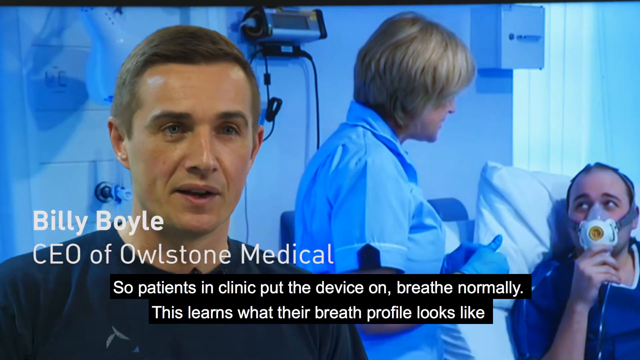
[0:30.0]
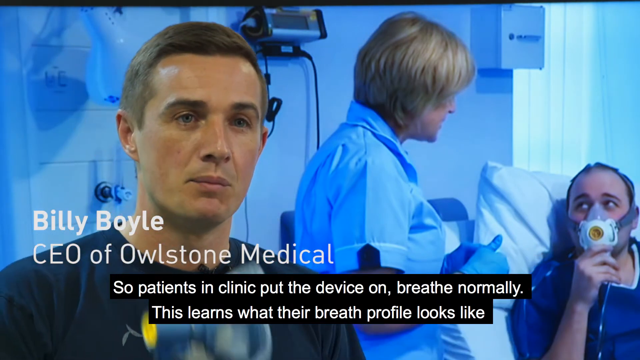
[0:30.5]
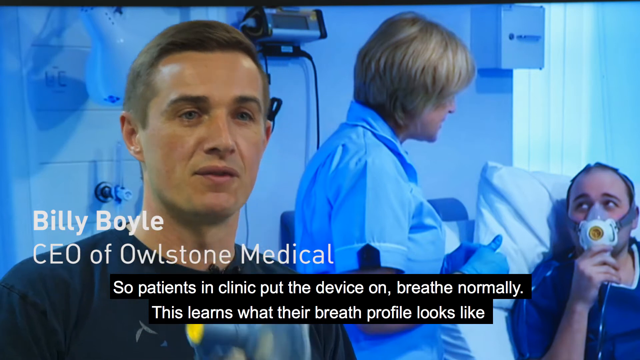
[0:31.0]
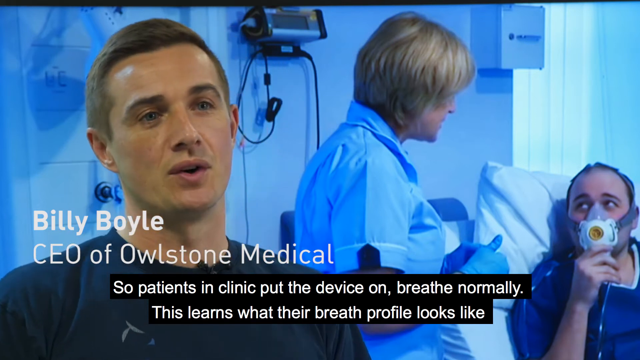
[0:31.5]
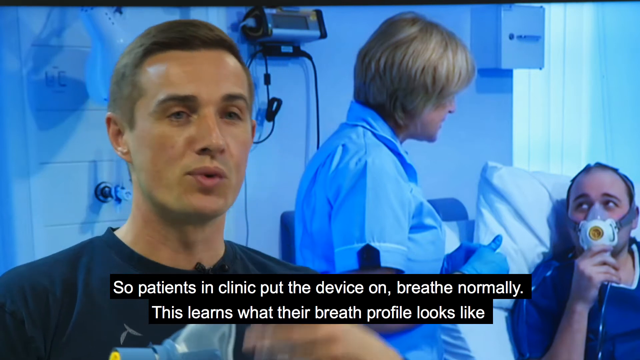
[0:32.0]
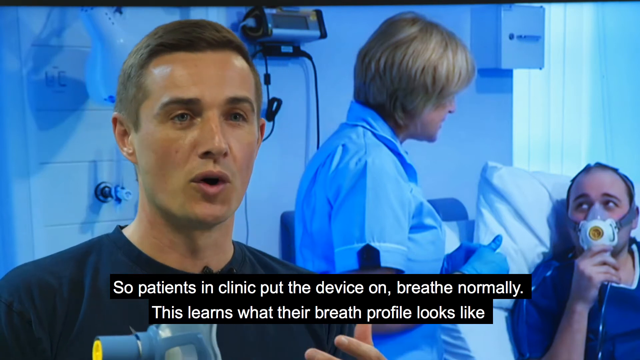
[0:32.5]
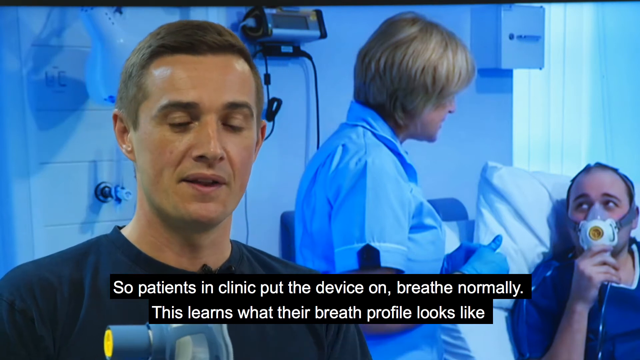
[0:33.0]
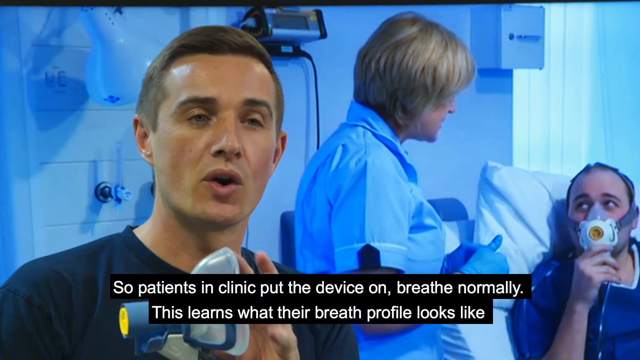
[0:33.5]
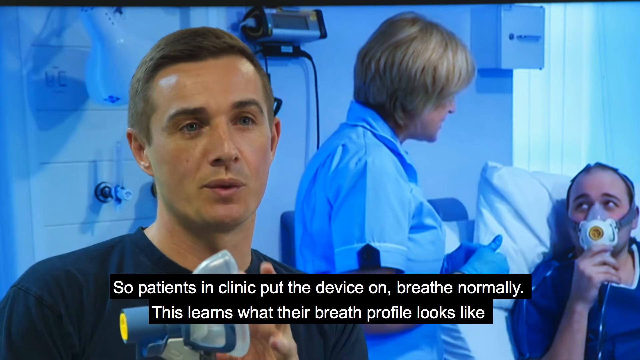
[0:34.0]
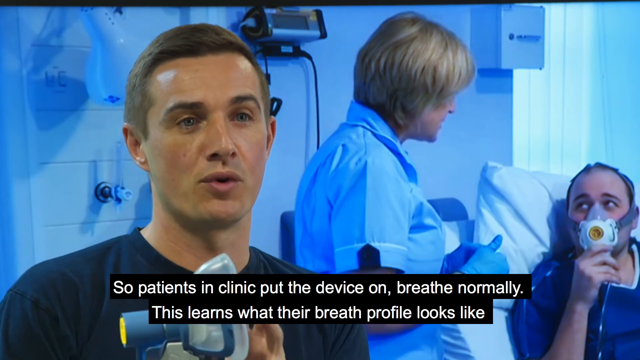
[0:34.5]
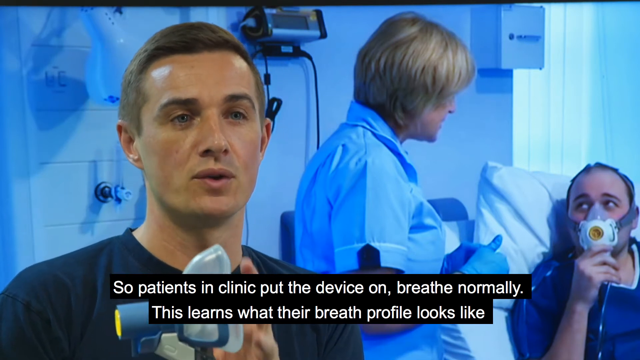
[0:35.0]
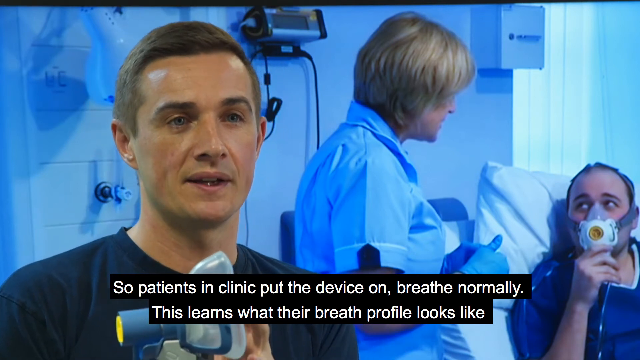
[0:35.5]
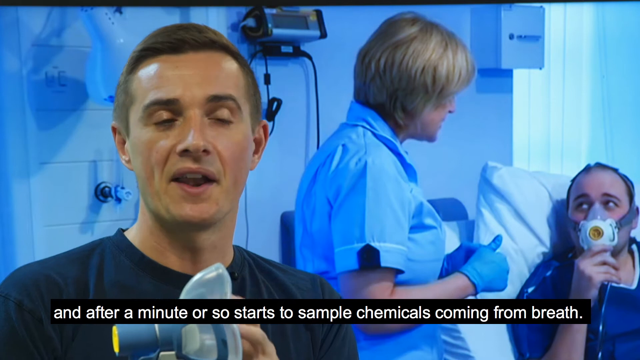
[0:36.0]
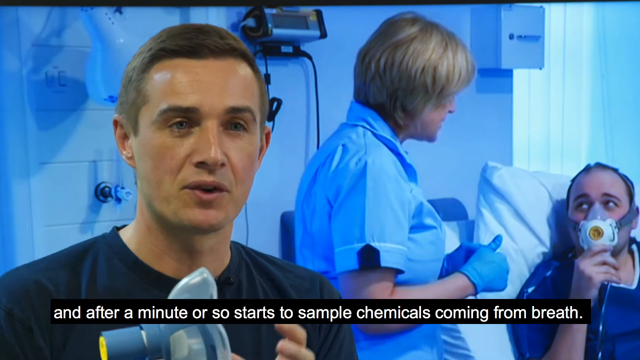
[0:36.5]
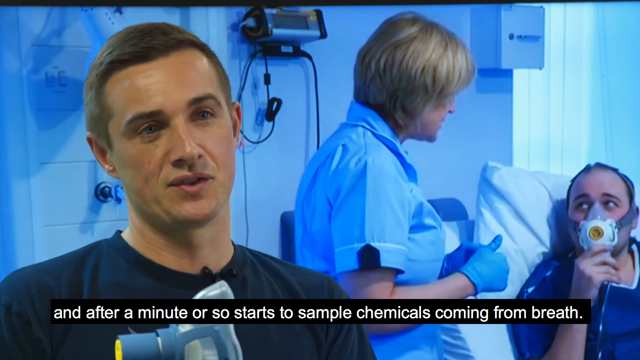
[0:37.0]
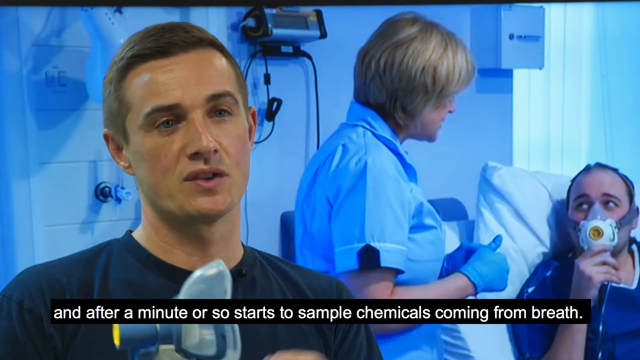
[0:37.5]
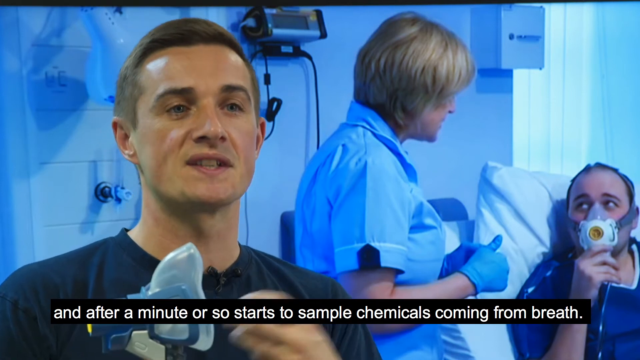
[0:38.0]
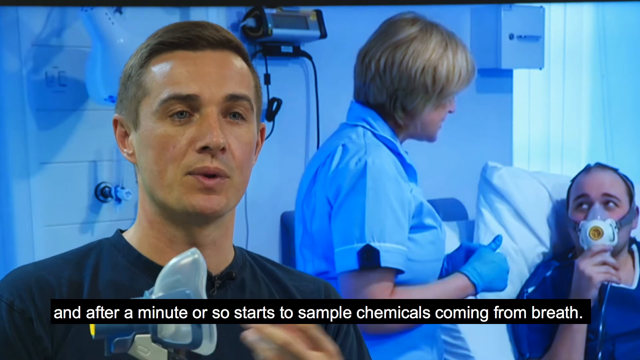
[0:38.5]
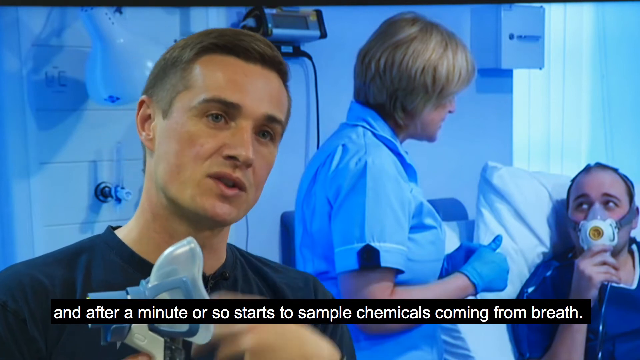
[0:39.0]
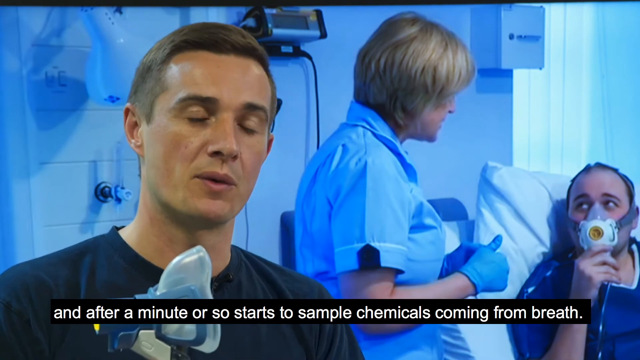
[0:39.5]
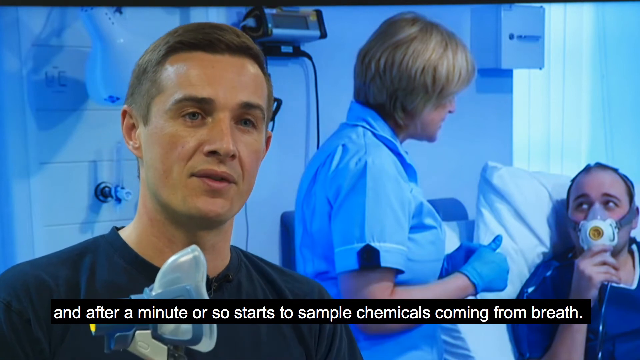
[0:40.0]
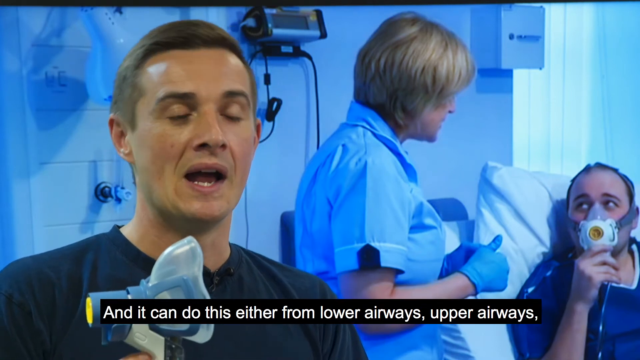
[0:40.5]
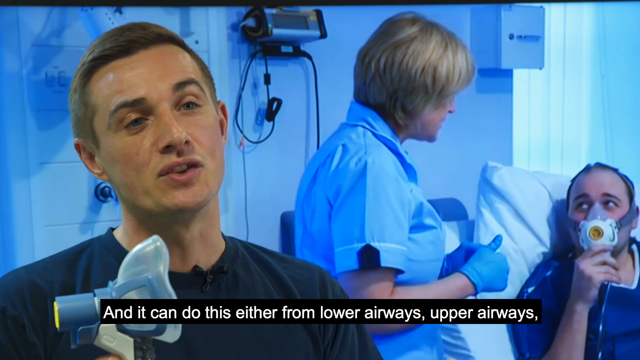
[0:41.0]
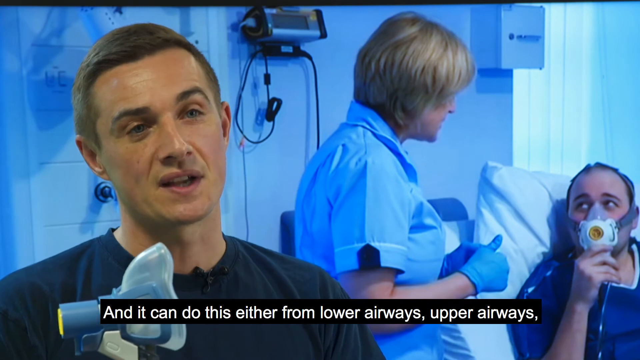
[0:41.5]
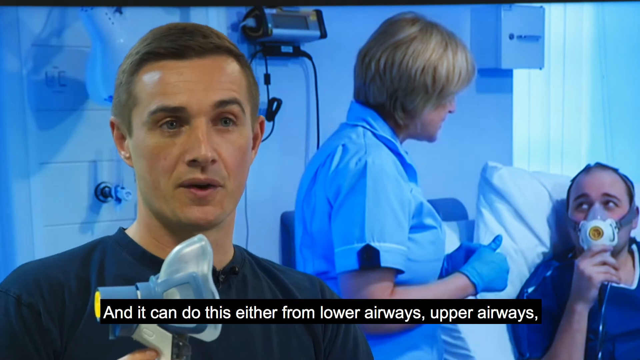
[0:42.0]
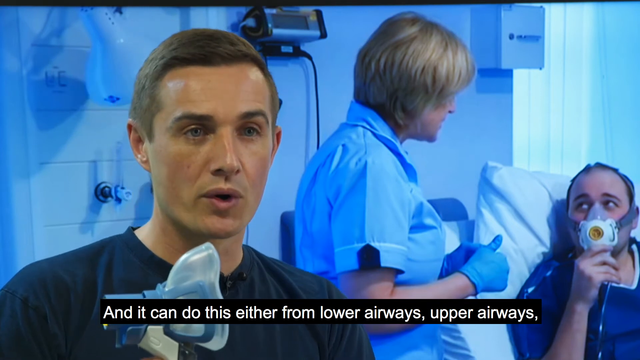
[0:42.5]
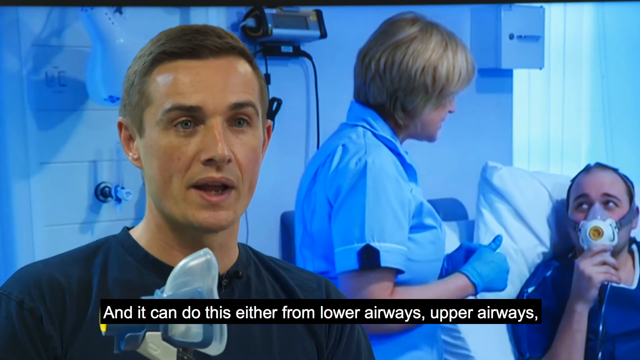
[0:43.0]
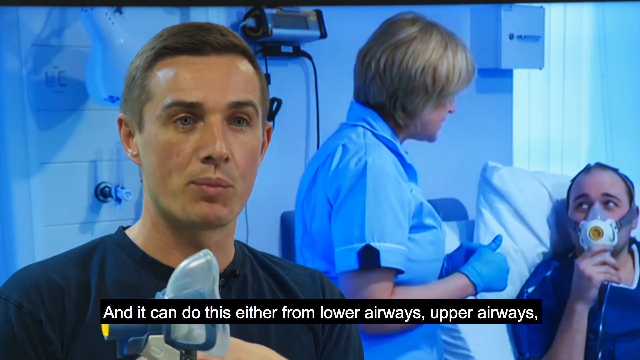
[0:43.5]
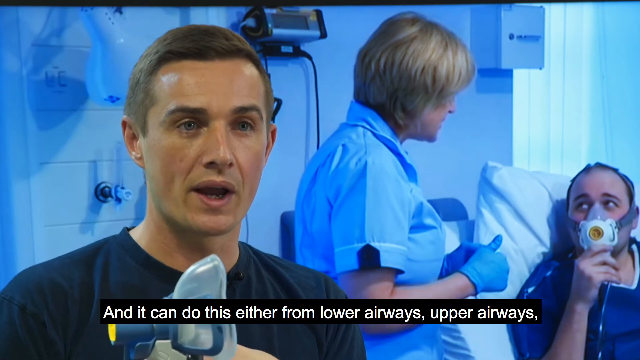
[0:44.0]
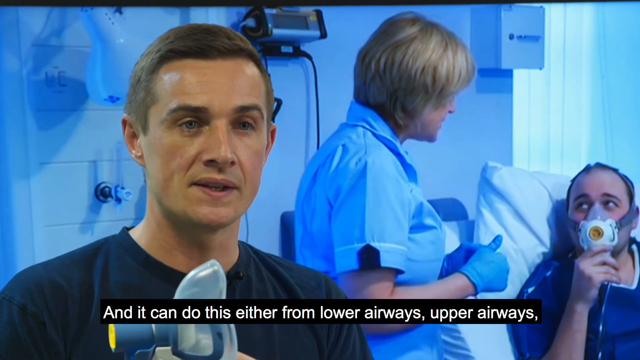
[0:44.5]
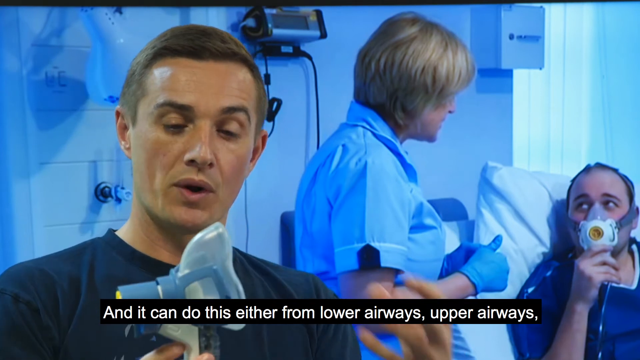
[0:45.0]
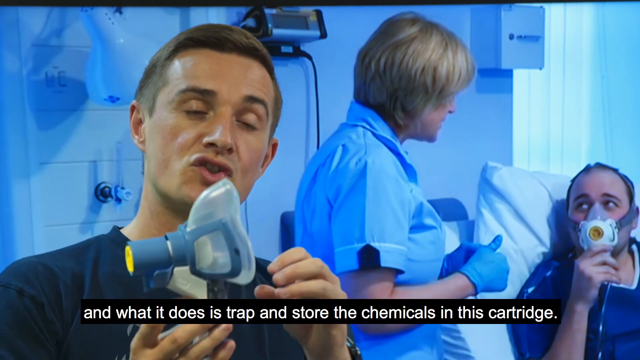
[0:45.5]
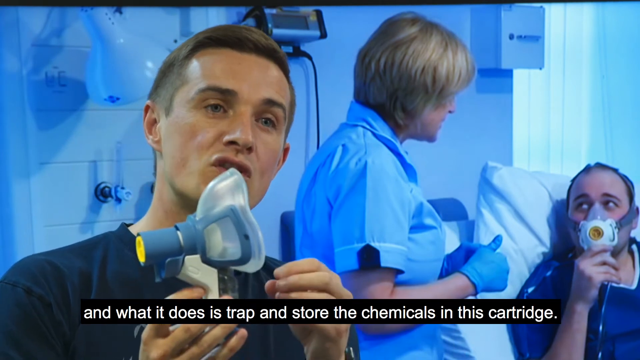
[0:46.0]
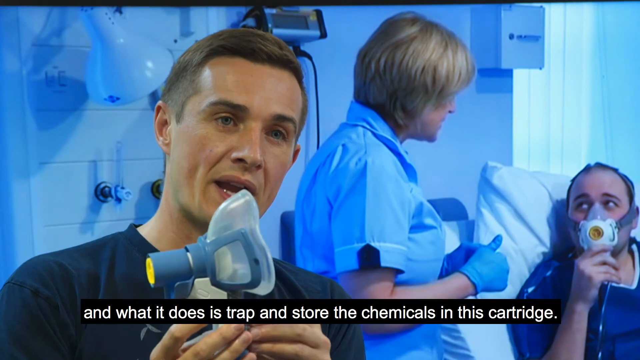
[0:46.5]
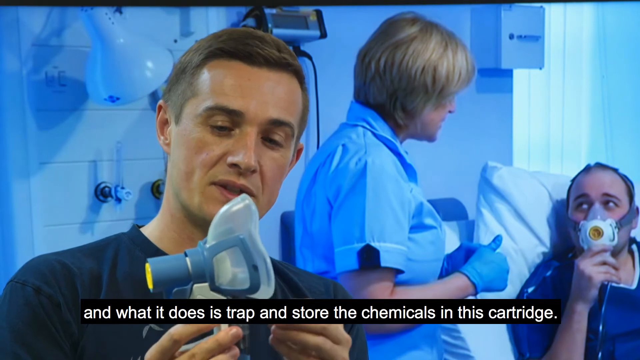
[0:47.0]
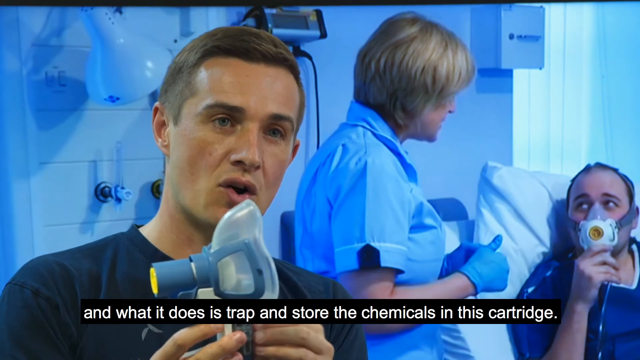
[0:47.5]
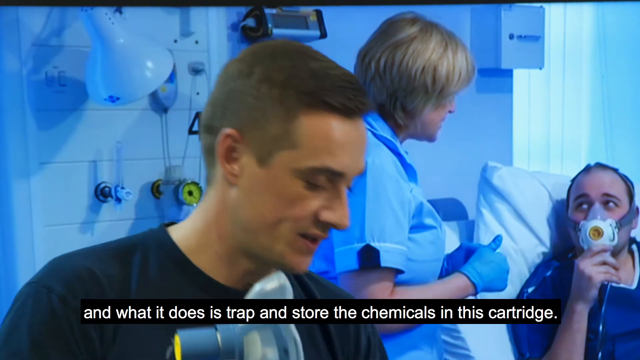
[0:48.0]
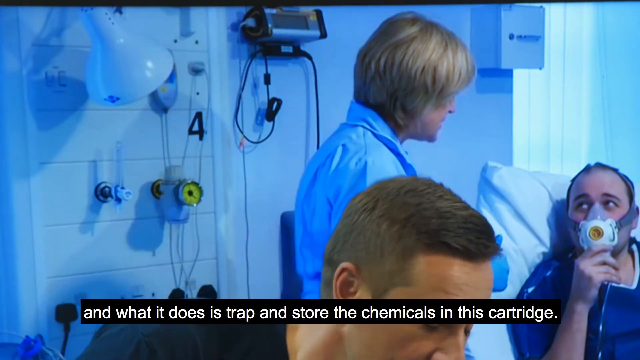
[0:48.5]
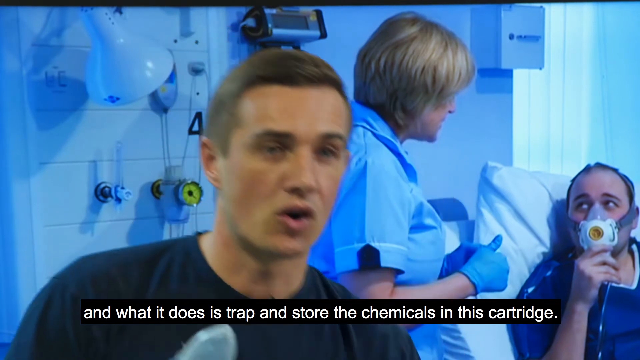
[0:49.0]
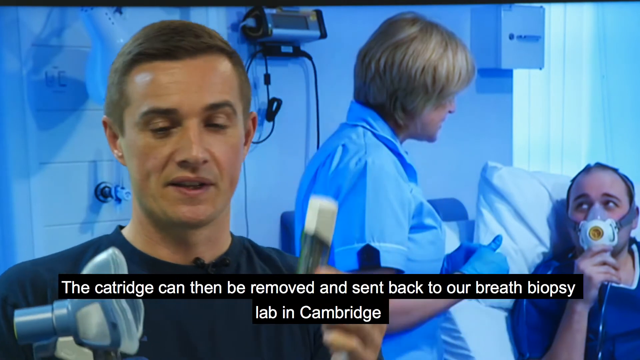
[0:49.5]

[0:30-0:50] An interview with Billy Boyle, the CEO of the company that makes the device, is shown. He says that patients in the clinic put the device on and start breathing, that the device learns their breath profile, and that it then compares breath samples to that profile to check for potentially dangerous biomarkers. Billy Boyle is in the foreground in a blue T-shirt, explaining the device he holds in his hand; he is possibly a white male of about 30, perhaps 35. His background is blue-screened in: a blue-tinted hospital room in which a technician of some kind gives the breath sampling device to a patient lying in bed in front of her. The patient looks rather cheerful, his eyes bright and his eyebrows raised, and he looks with enjoyment at the medical assistant next to him, to his right.